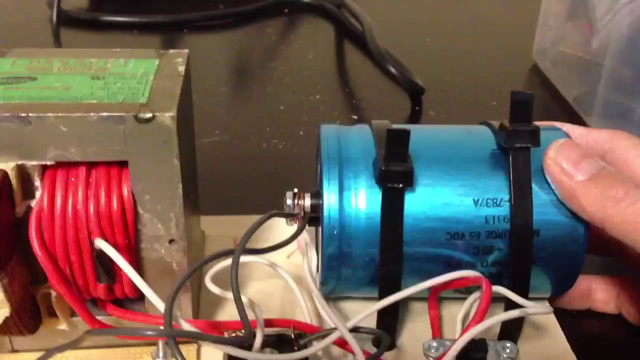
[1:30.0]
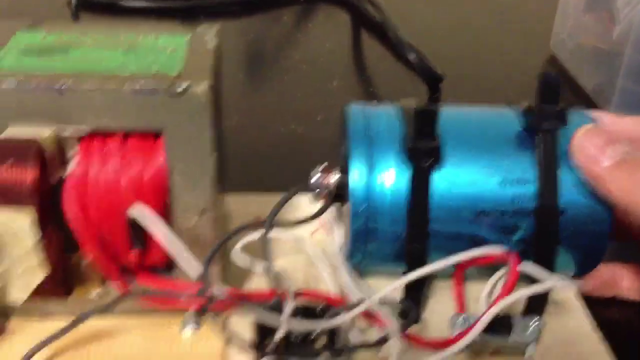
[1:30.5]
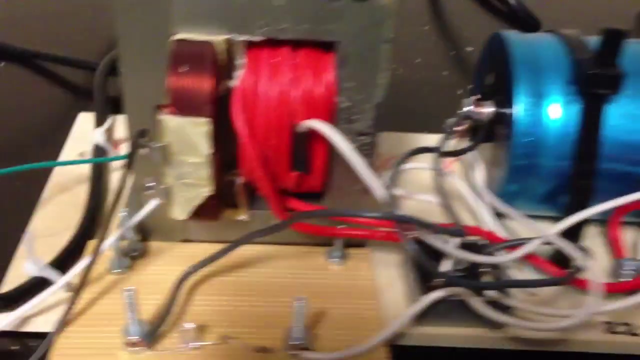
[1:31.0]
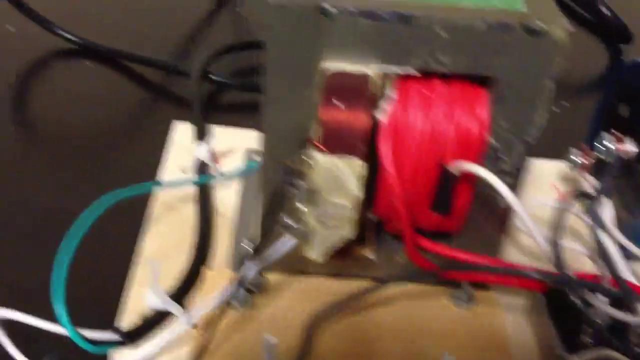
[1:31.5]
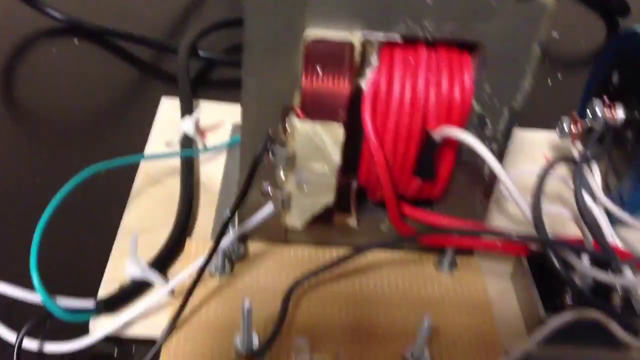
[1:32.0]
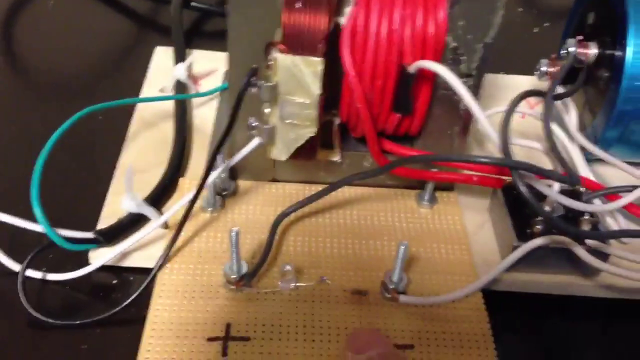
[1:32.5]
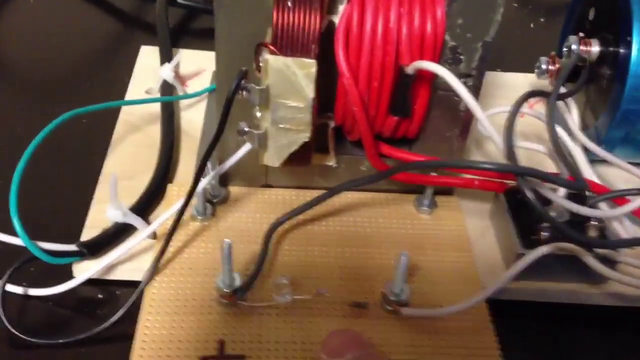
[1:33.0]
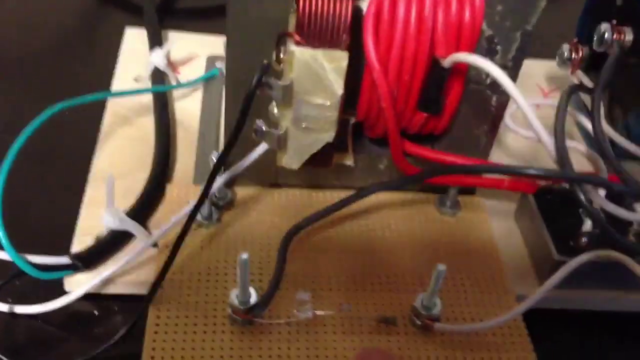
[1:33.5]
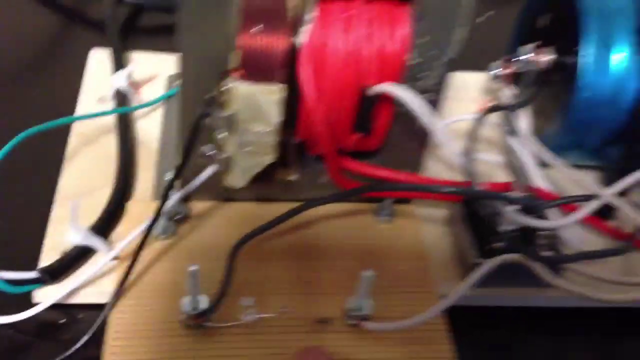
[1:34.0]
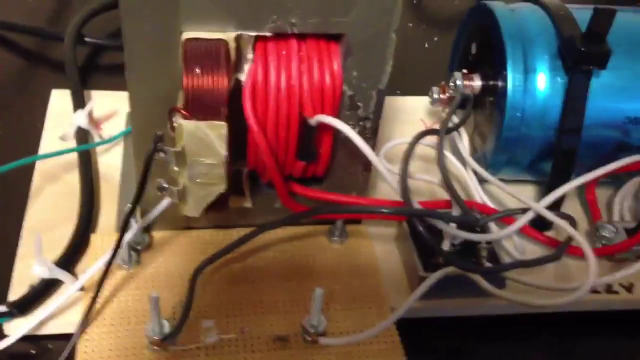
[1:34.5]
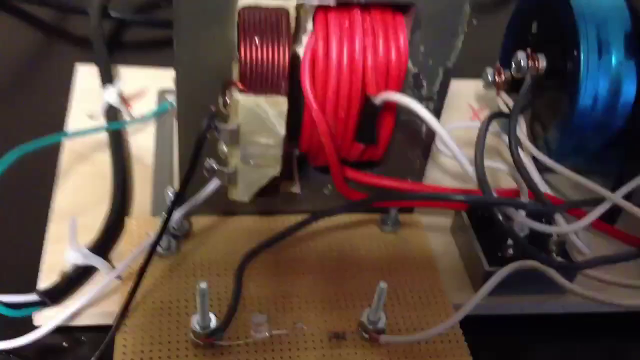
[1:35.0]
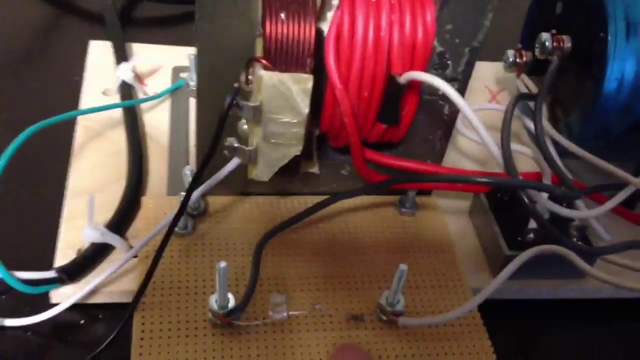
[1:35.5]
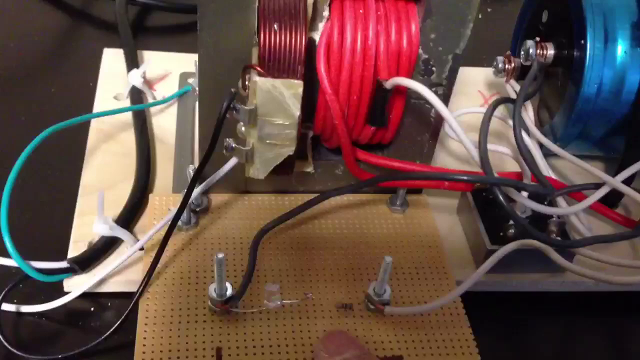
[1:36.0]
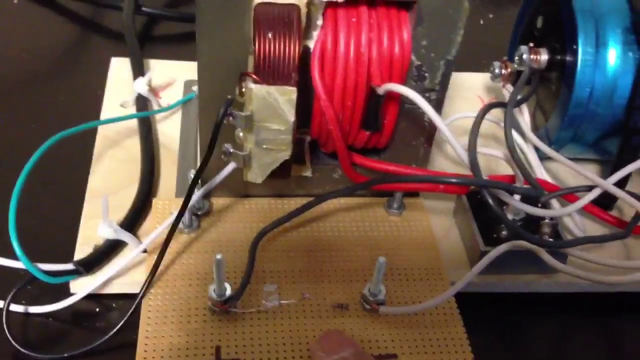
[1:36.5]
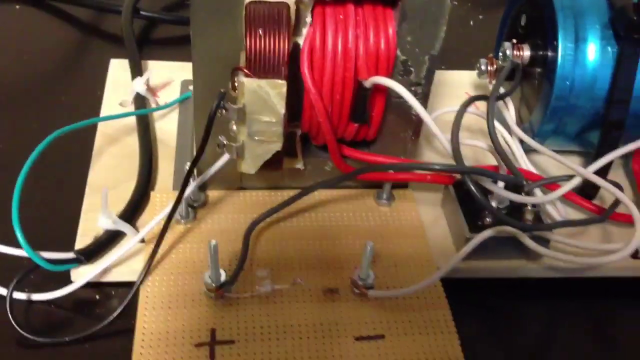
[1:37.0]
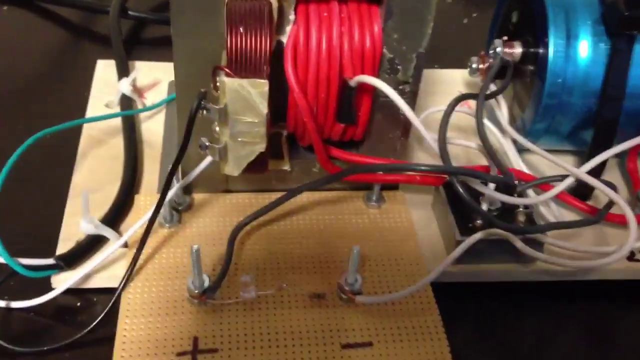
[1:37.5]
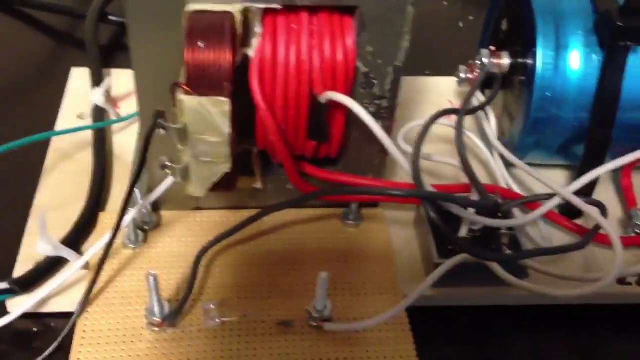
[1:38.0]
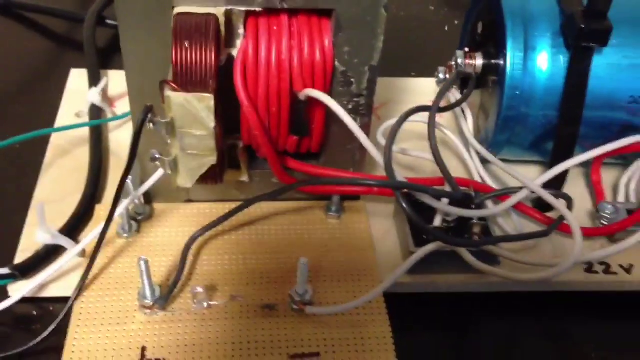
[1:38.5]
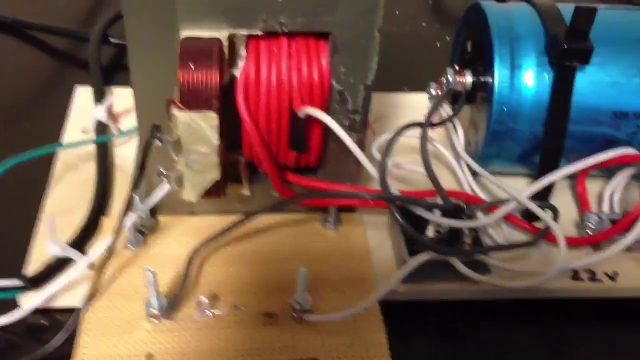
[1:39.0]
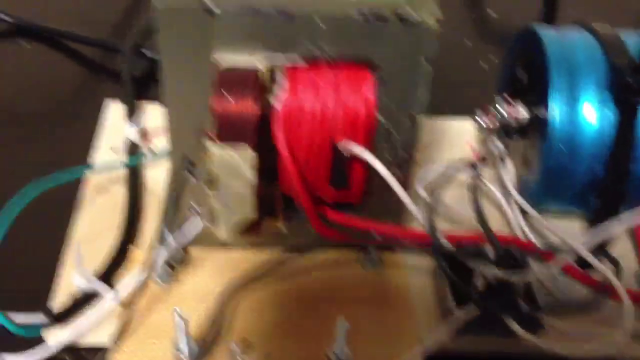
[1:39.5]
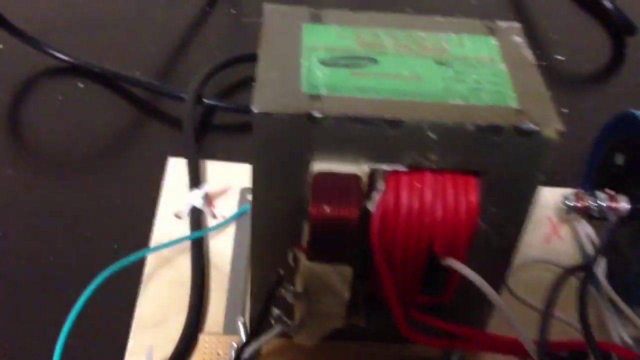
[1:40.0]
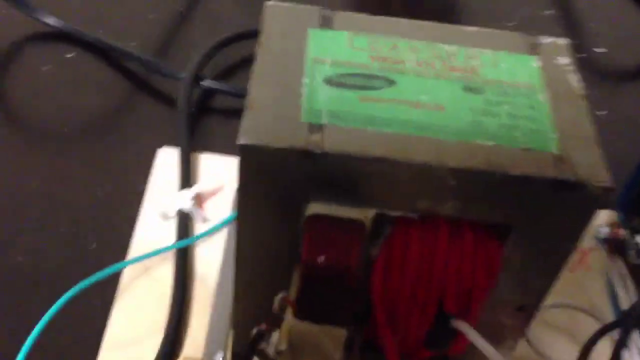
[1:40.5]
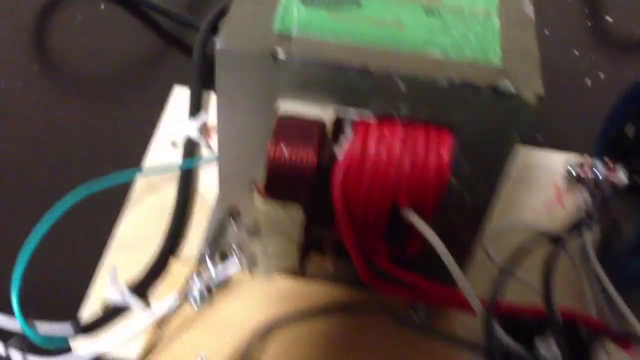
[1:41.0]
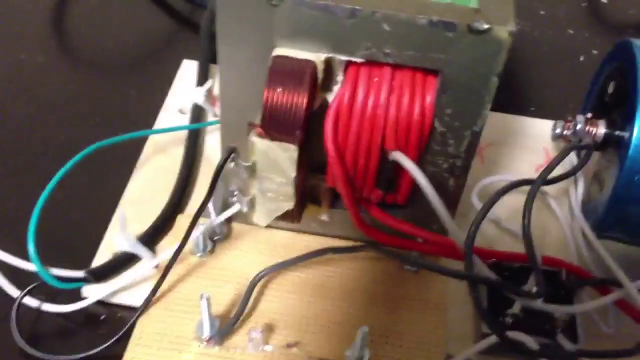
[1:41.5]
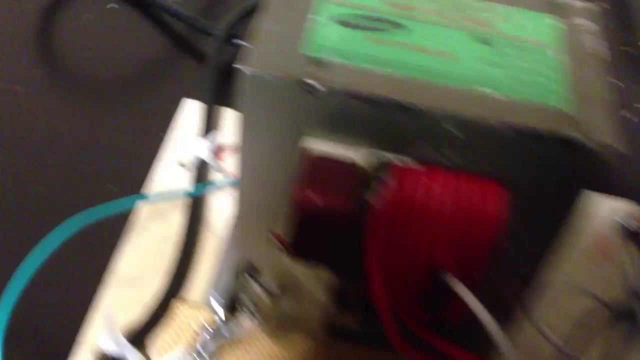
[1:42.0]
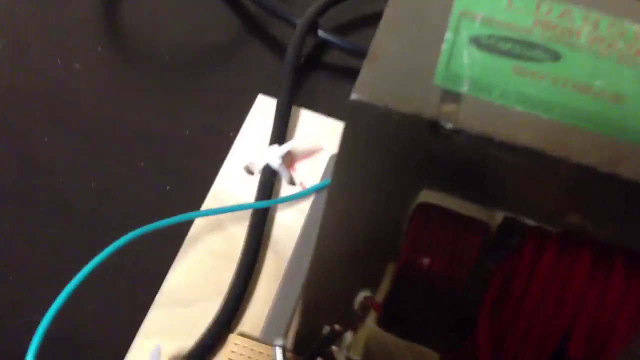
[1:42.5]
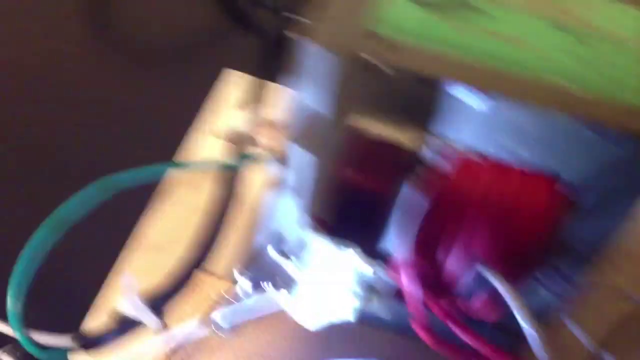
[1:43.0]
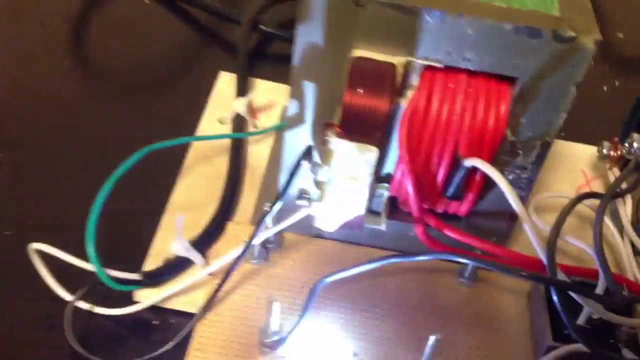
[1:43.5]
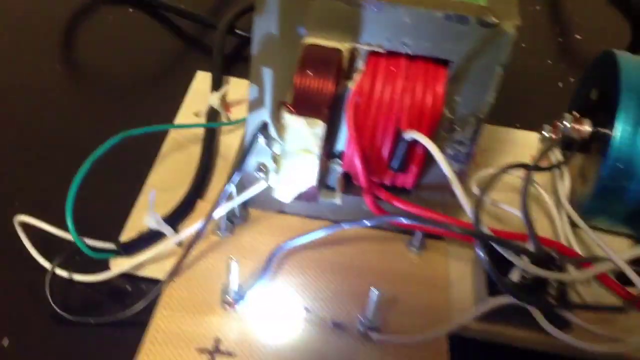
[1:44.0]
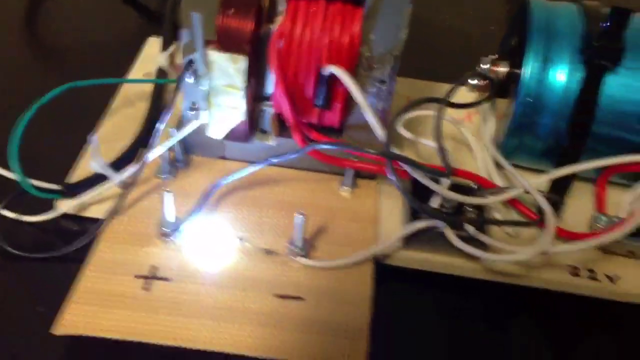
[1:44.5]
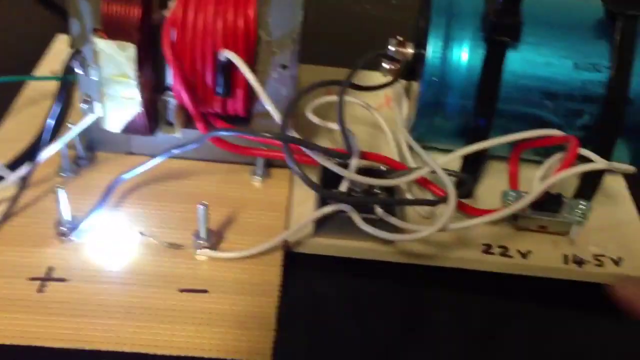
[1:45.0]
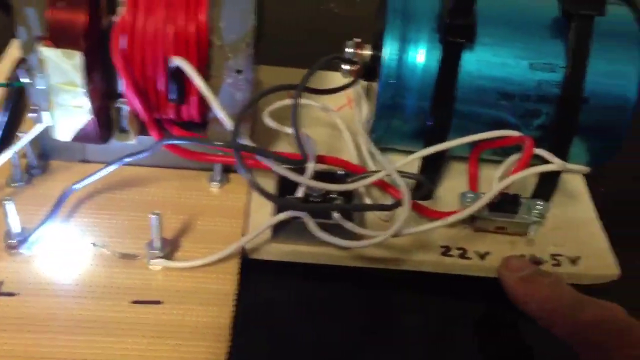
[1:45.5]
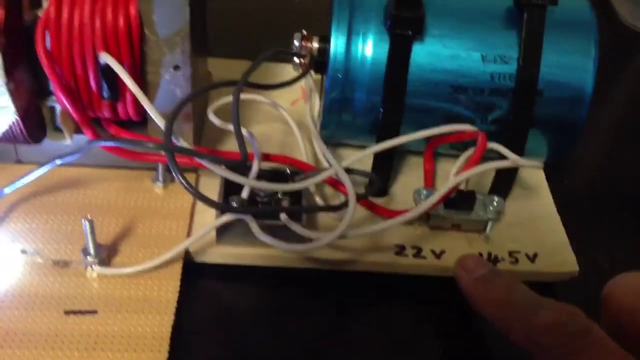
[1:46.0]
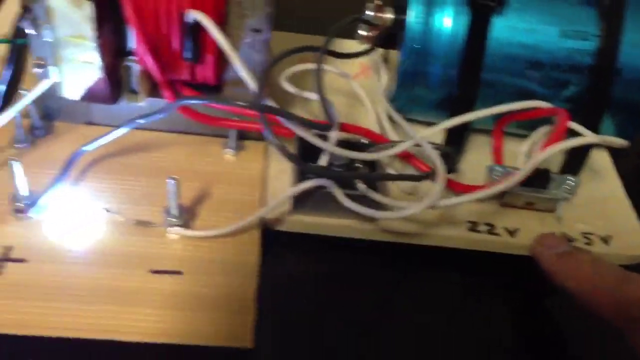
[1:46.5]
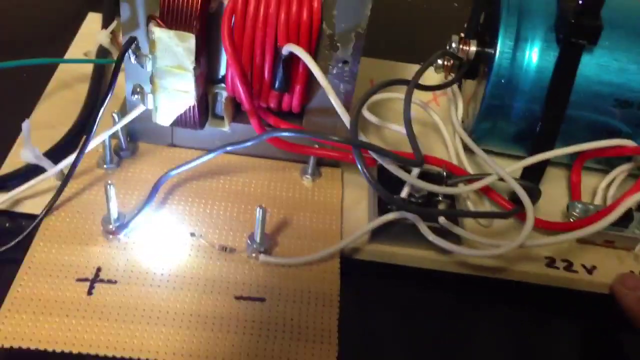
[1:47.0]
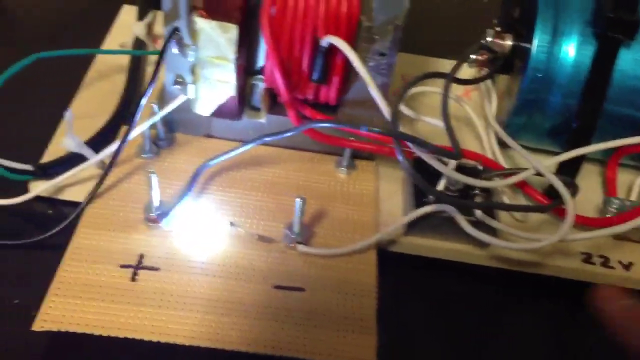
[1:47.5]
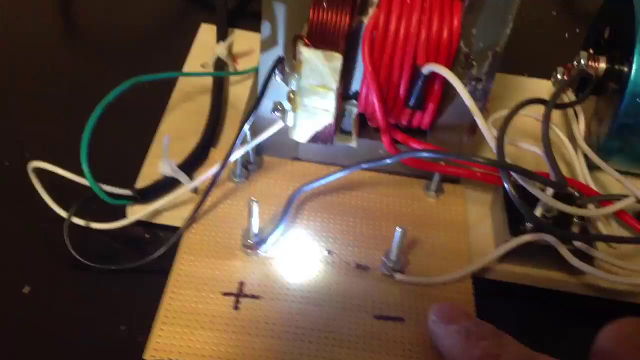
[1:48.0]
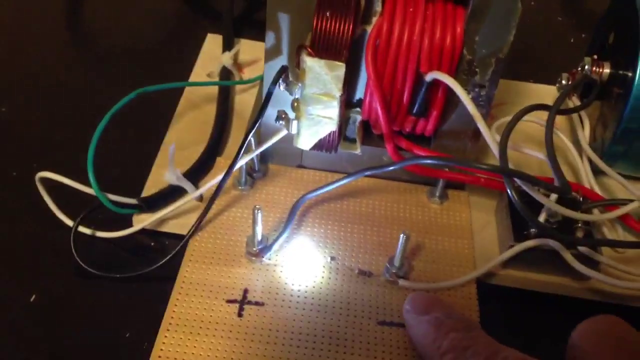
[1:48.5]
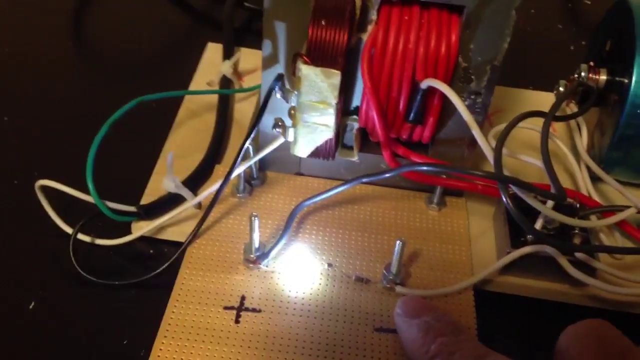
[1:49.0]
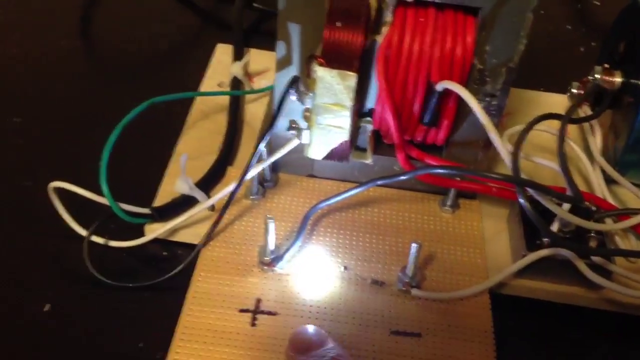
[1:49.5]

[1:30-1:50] While the hand holds the metallic blue cylinder, the camera moves to the metal block with the red wires, then focuses slightly down on the board in front of it with pegs that have a nut at each base; there are actually five pegs, two of them very close together in the upper left corner. The camera wobbles a little and a shadow comes in from the bottom right, and the focus stays on that area. The camera goes back up to the green label and suddenly wobbles, and then a light comes up from the bottom and illuminates the metal block; the light is coming from the board with the pegs. In front of the bottom two pegs, the right one has a negative sign under it and the left one has a positive sign under it. A finger keeps pointing at the space to the right of "22 V", then points at the peg with the white wire and moves to the plus sign.